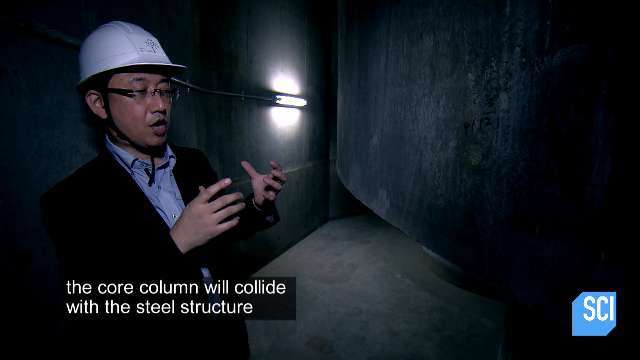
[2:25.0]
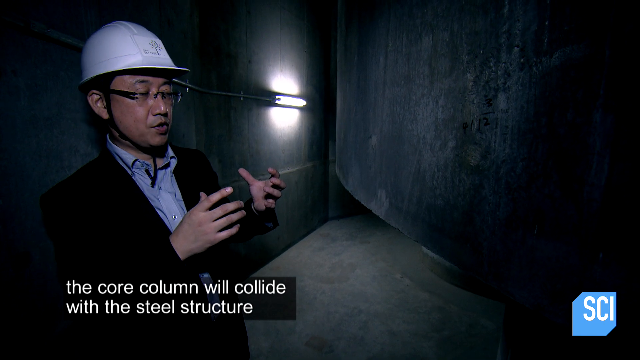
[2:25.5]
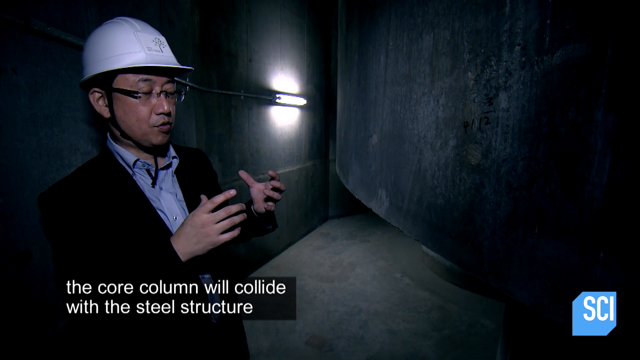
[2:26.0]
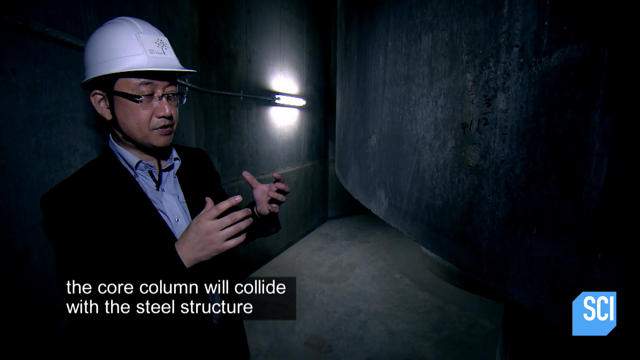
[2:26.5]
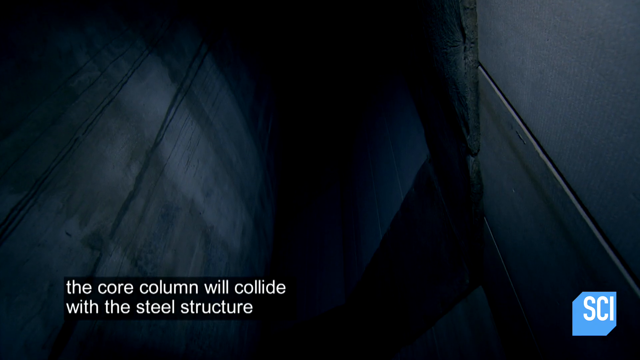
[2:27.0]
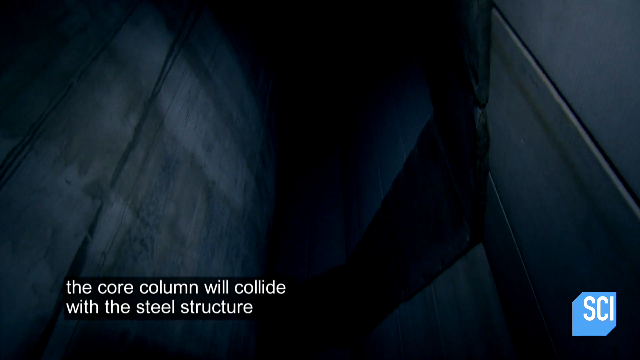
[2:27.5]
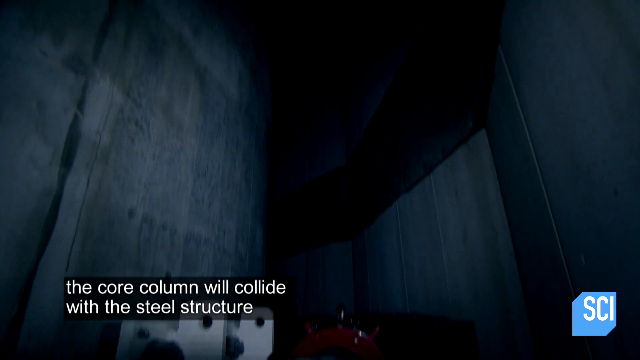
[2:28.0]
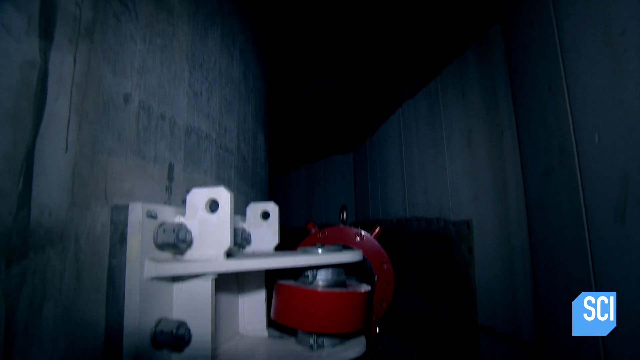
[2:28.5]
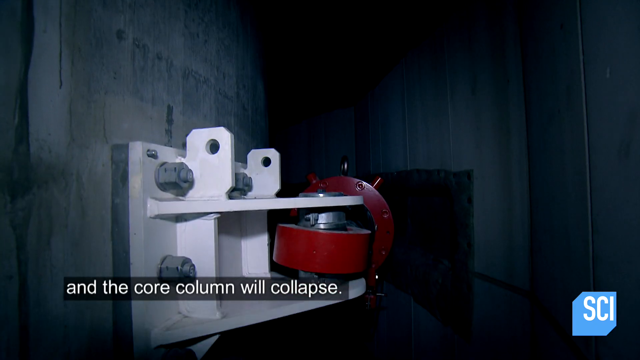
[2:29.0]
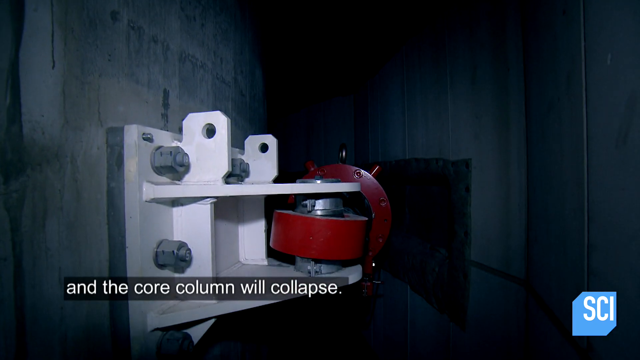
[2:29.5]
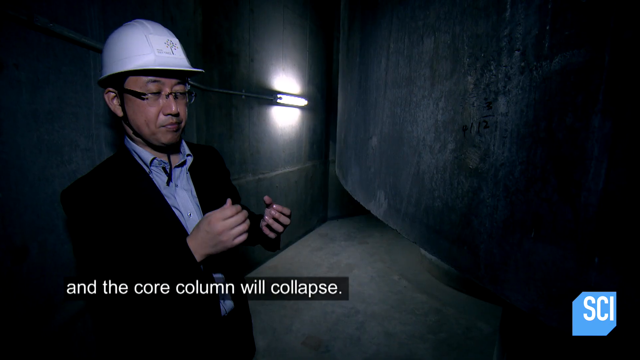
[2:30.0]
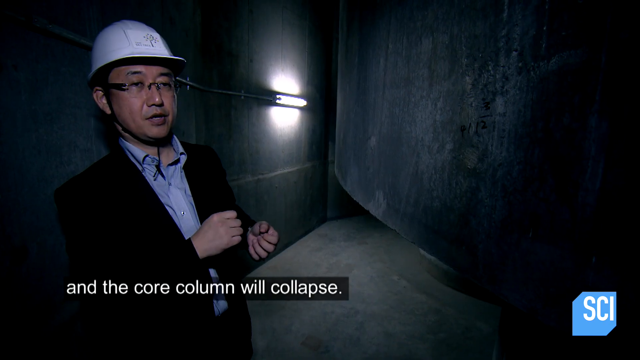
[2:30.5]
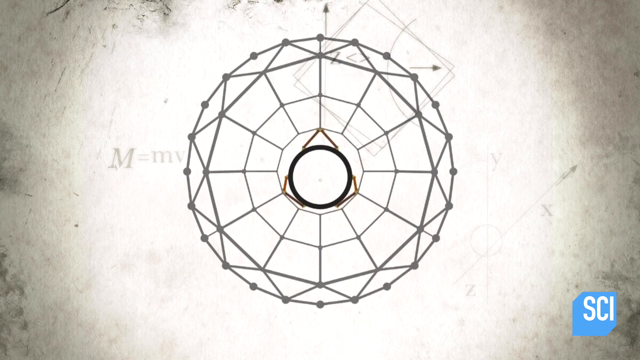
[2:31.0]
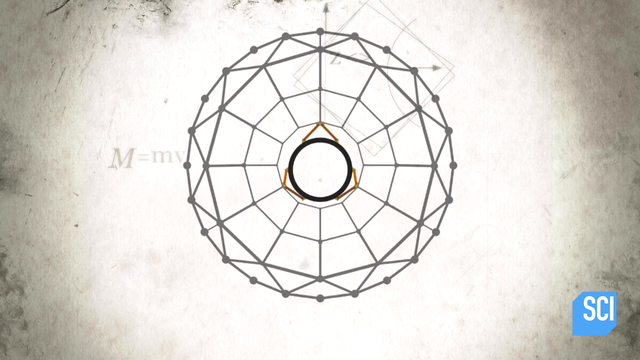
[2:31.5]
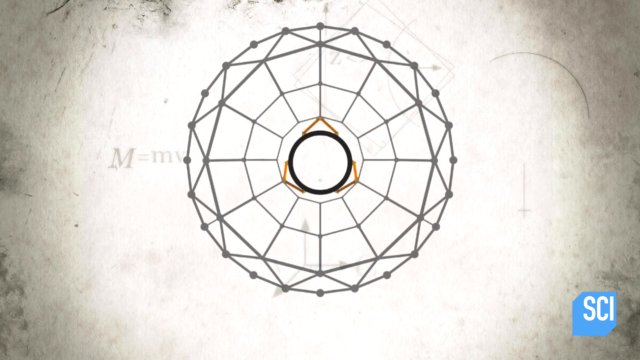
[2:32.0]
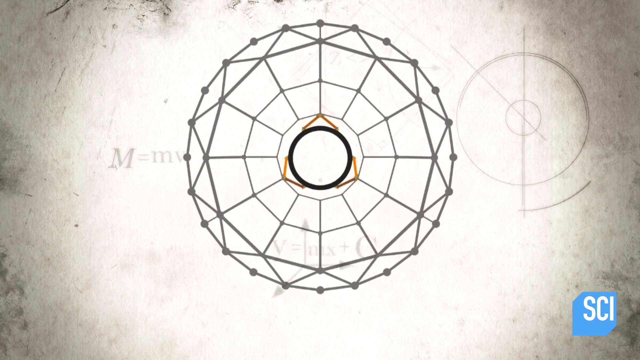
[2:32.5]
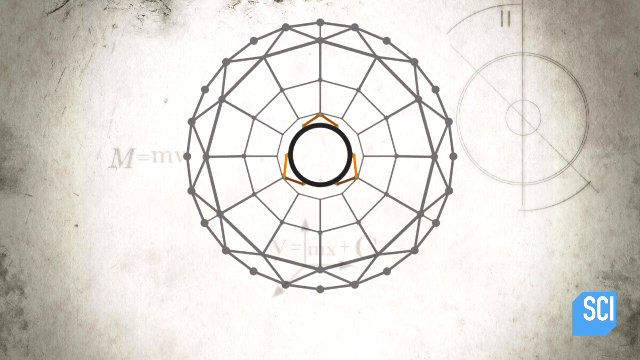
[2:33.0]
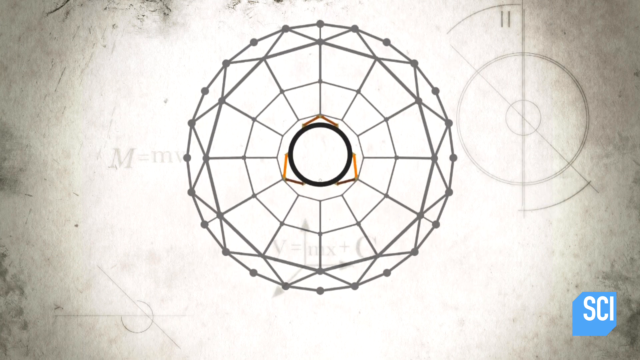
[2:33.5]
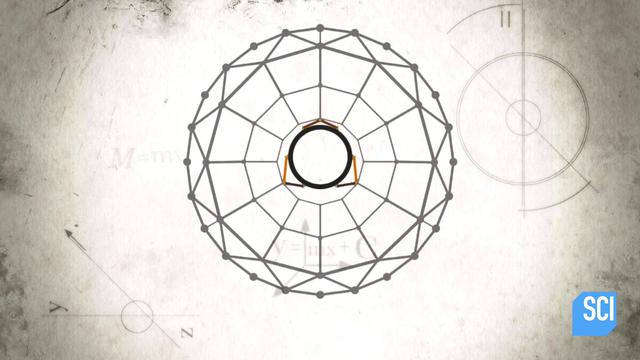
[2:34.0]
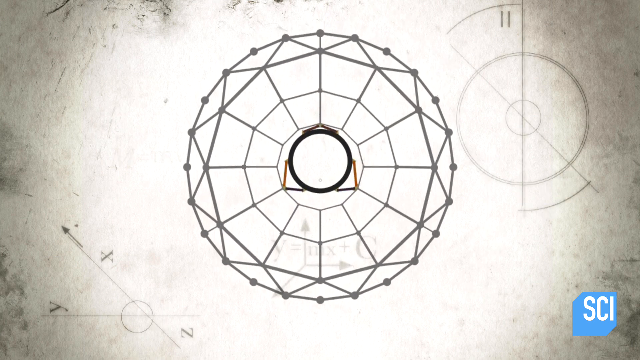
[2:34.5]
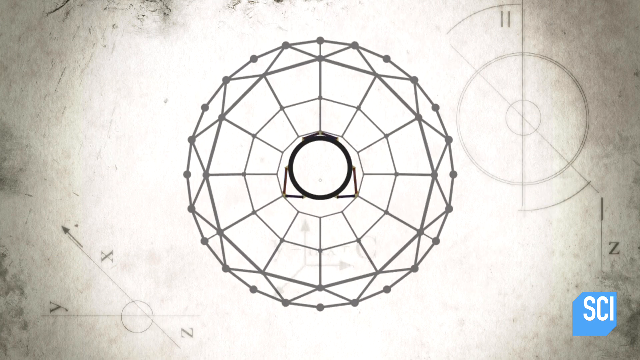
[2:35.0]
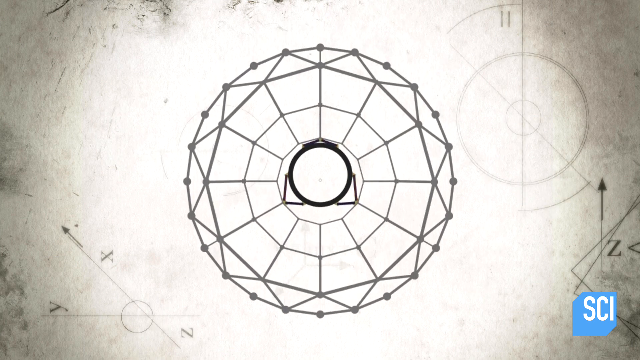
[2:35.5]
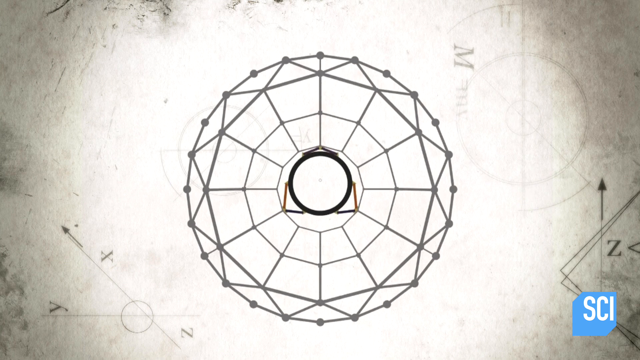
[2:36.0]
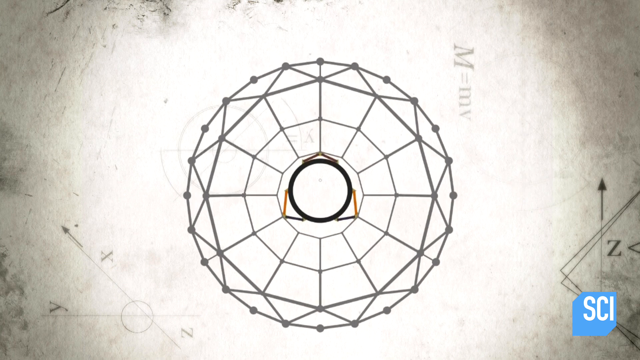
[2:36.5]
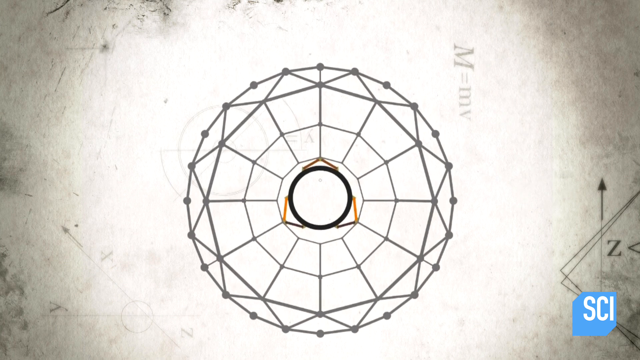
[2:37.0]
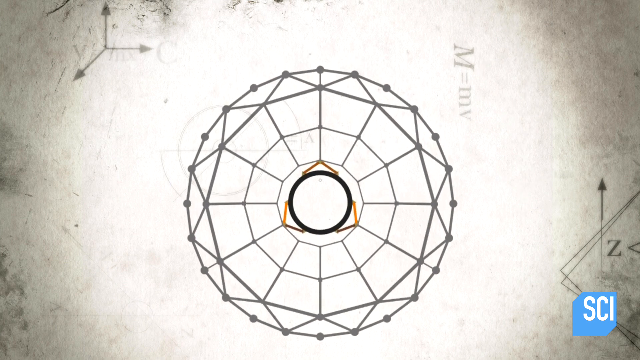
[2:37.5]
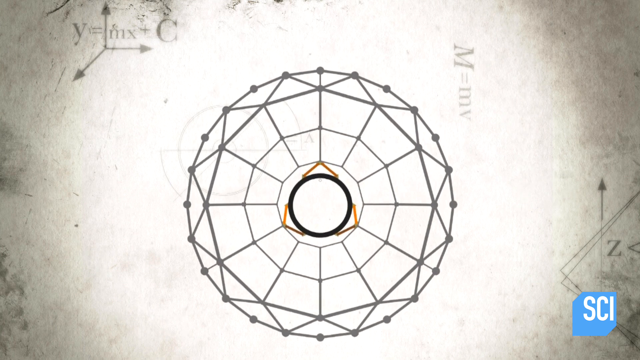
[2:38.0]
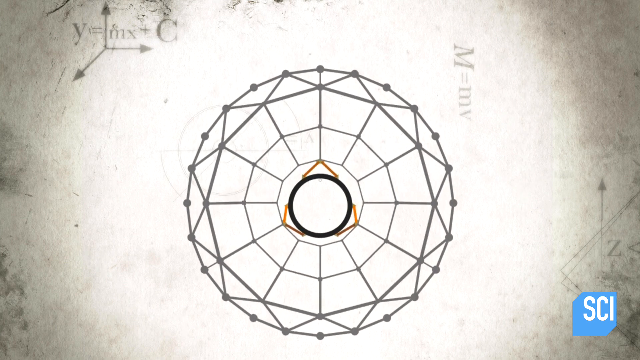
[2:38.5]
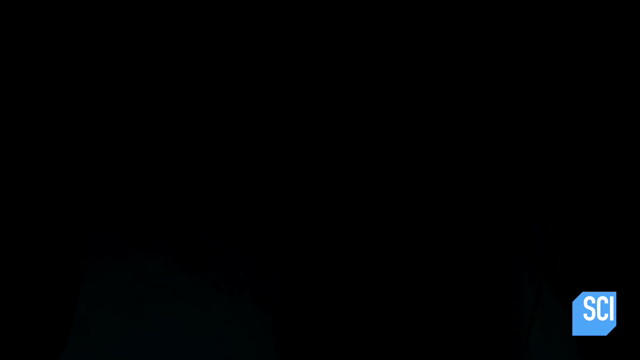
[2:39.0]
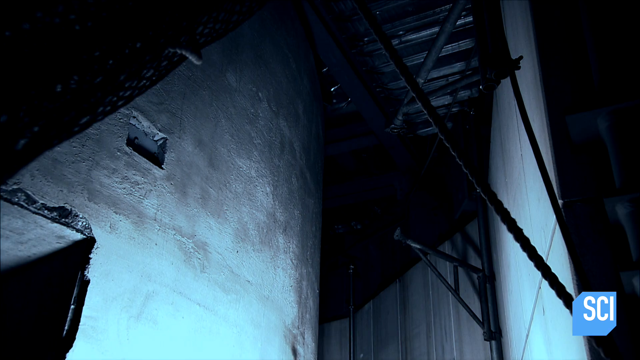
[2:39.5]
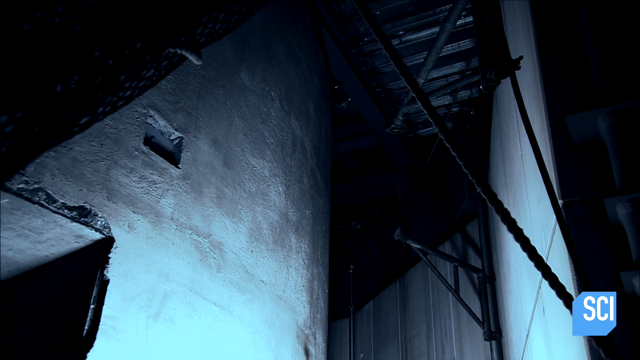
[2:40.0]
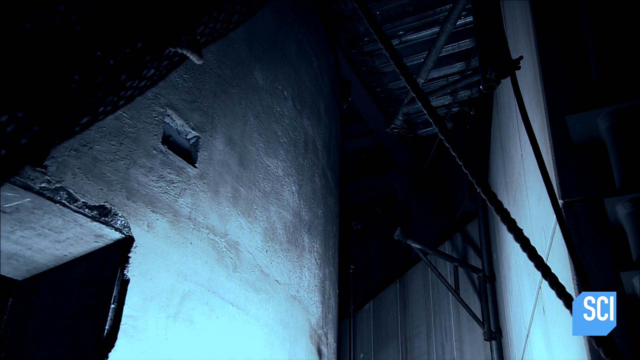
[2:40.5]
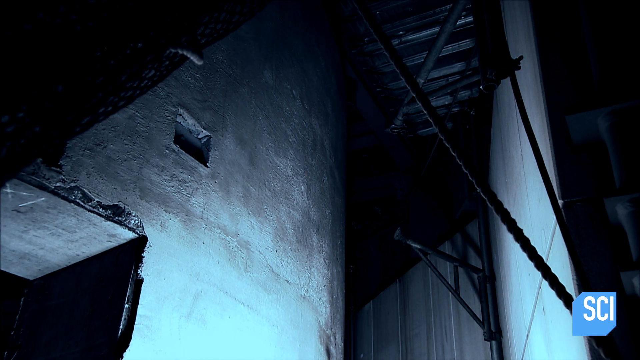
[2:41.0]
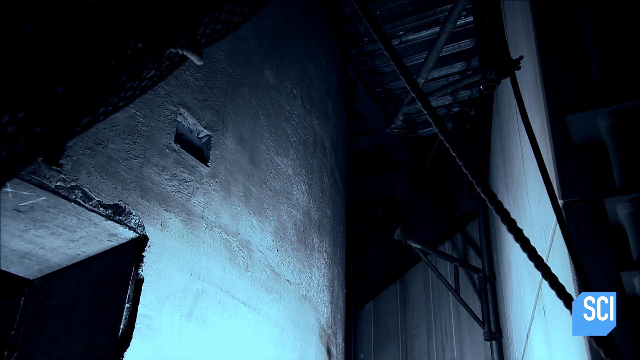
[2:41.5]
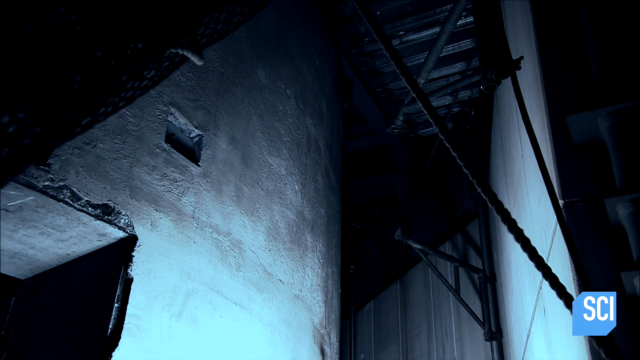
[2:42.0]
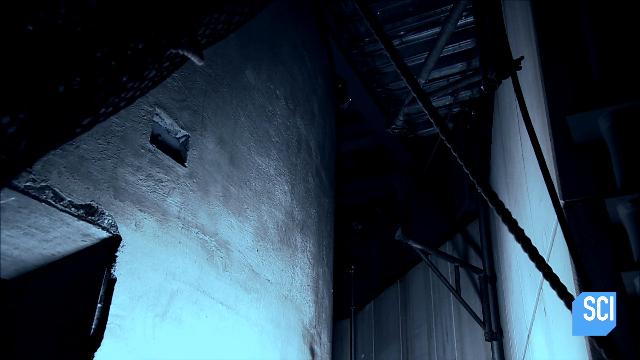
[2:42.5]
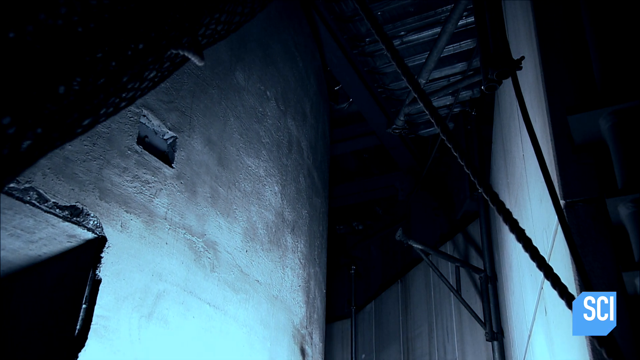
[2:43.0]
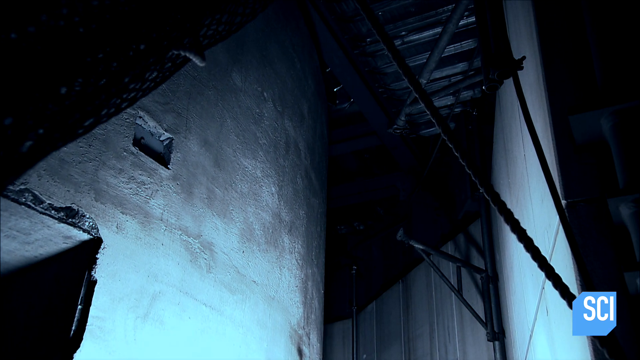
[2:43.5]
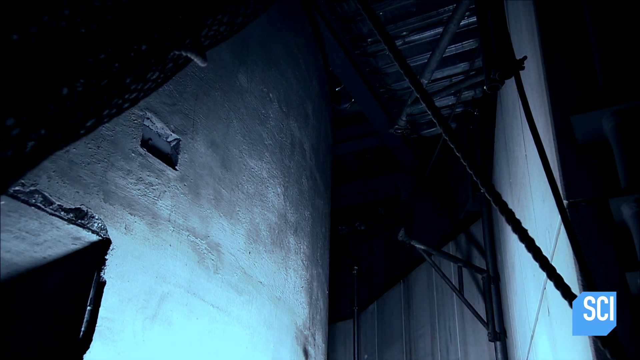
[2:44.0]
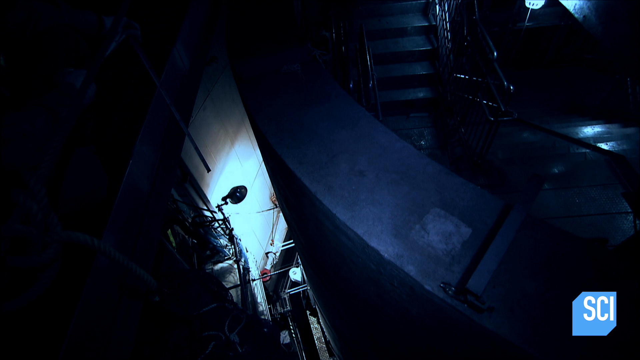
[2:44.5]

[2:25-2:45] The engineer is shown, followed by an overview in a blueprint view of the top of the Sky tree. The view then focuses on a closer image inside the Sky tree, which looks like it is actually moving, showing how the Sky tree would look in motion.